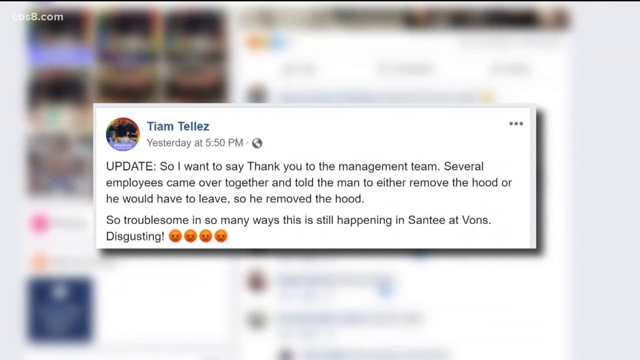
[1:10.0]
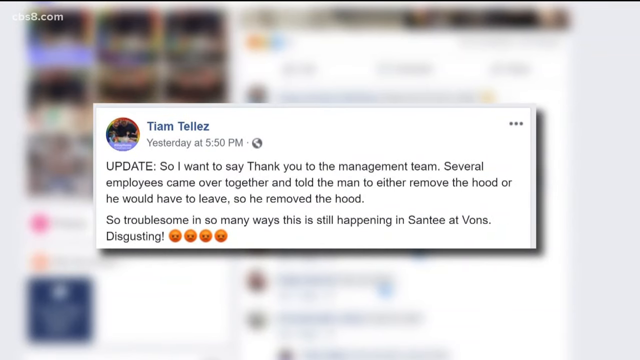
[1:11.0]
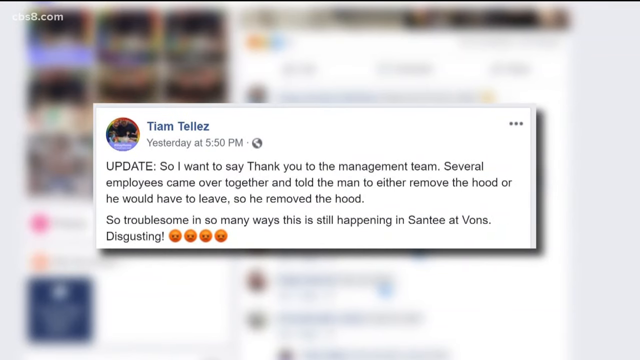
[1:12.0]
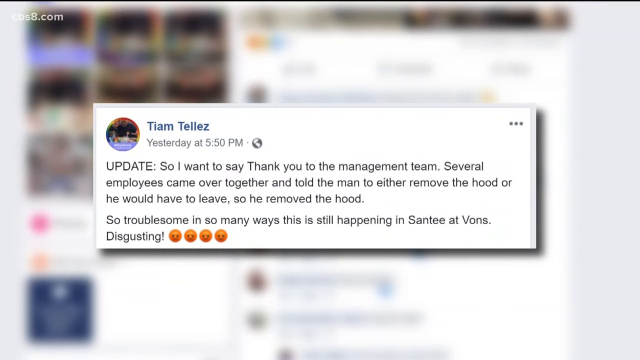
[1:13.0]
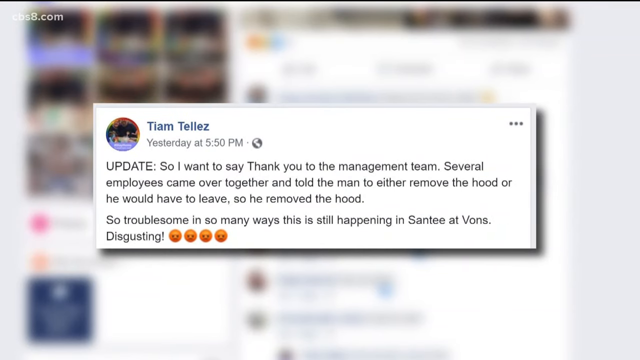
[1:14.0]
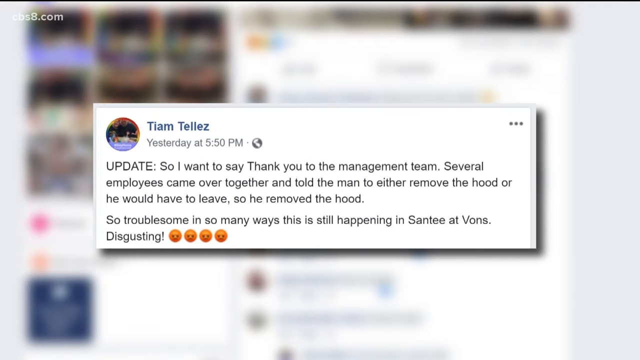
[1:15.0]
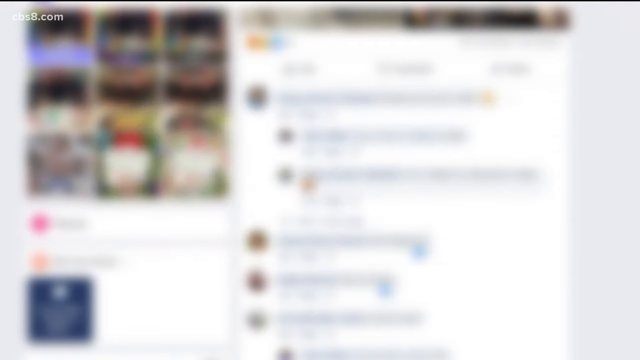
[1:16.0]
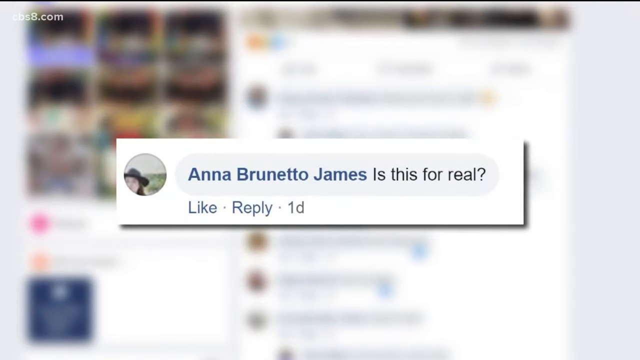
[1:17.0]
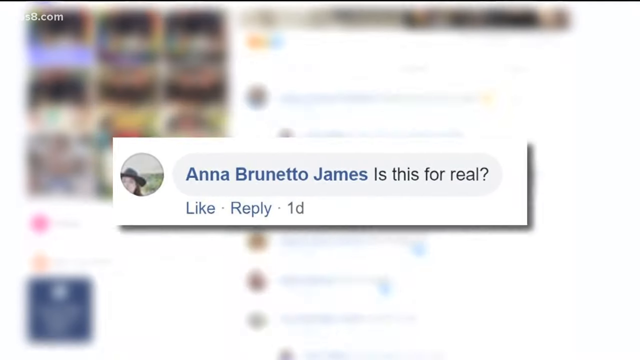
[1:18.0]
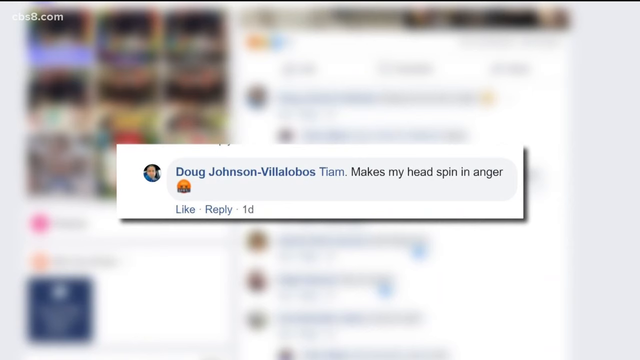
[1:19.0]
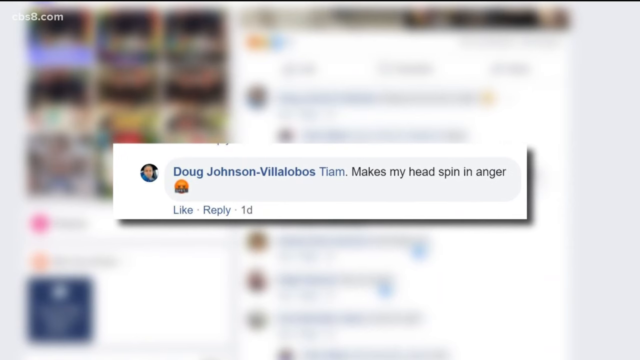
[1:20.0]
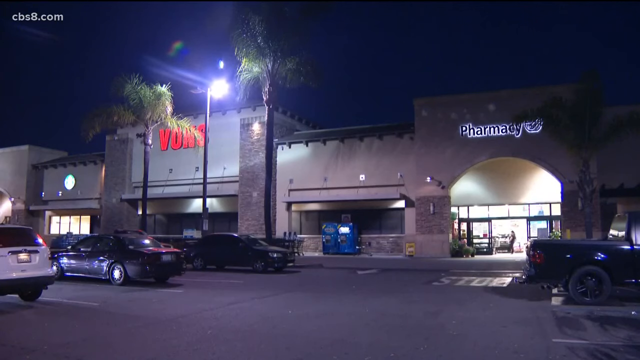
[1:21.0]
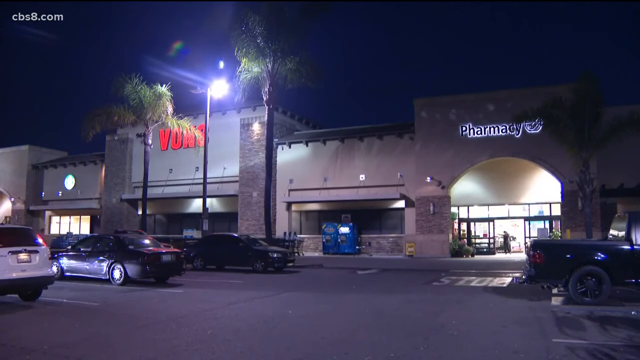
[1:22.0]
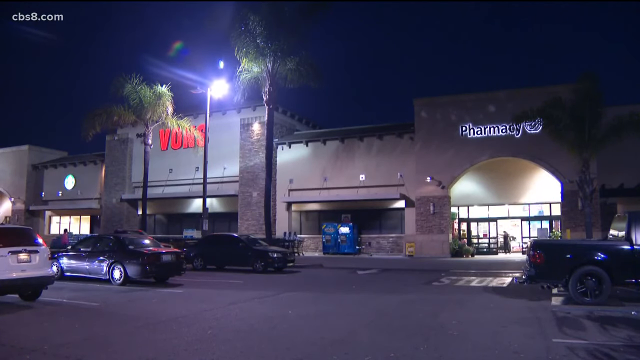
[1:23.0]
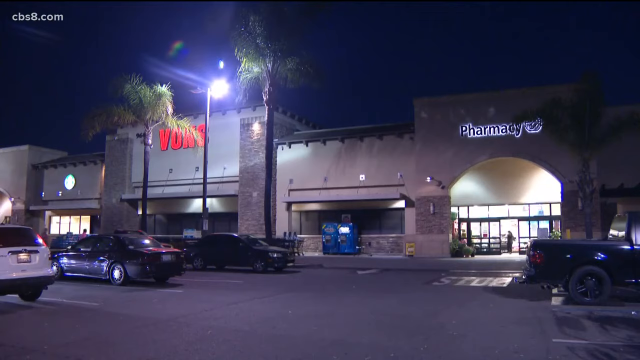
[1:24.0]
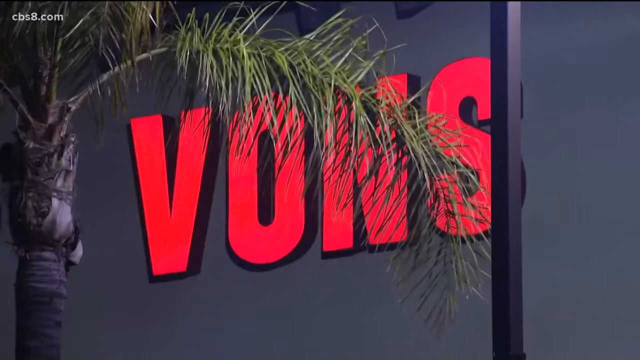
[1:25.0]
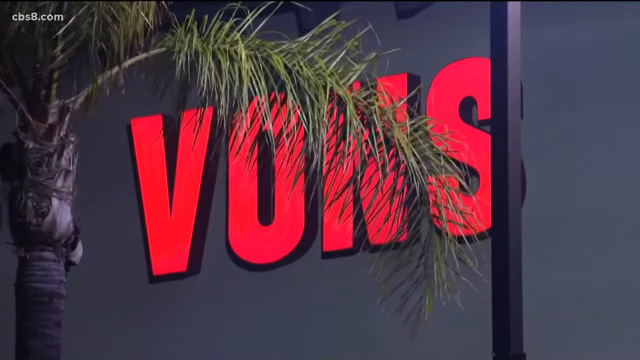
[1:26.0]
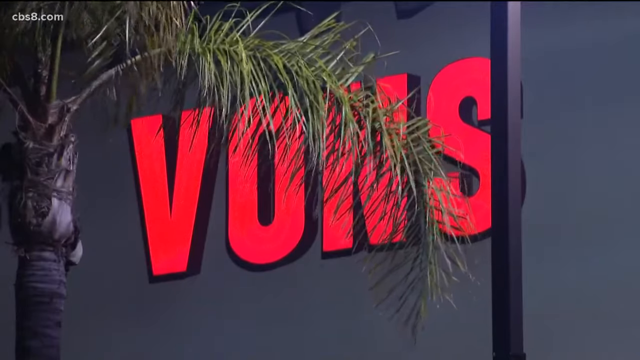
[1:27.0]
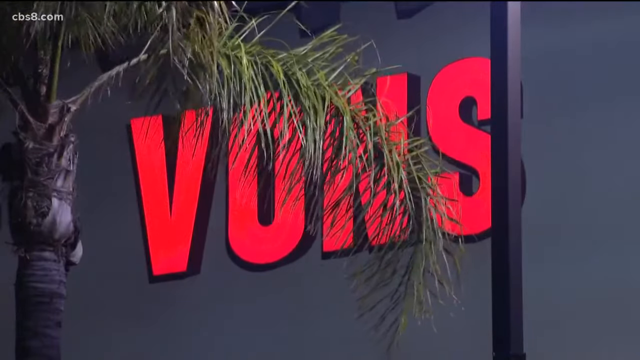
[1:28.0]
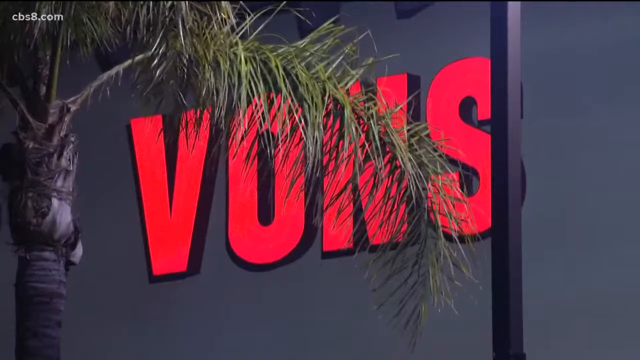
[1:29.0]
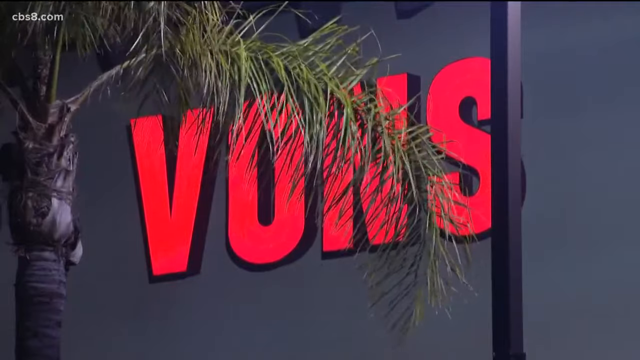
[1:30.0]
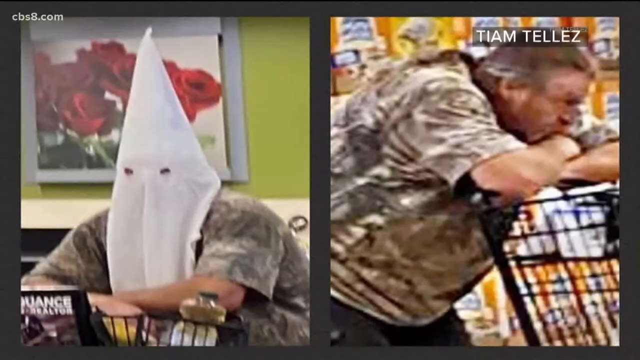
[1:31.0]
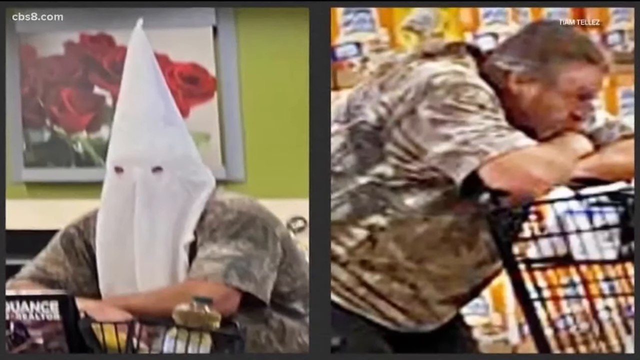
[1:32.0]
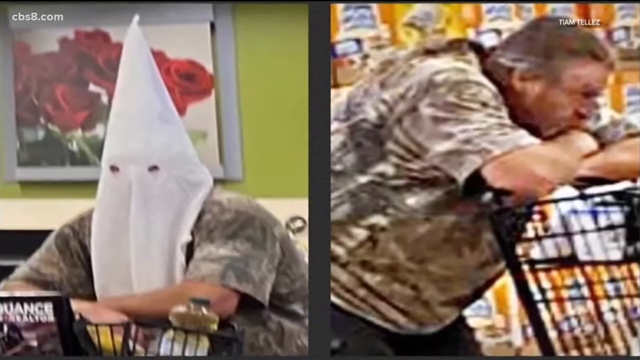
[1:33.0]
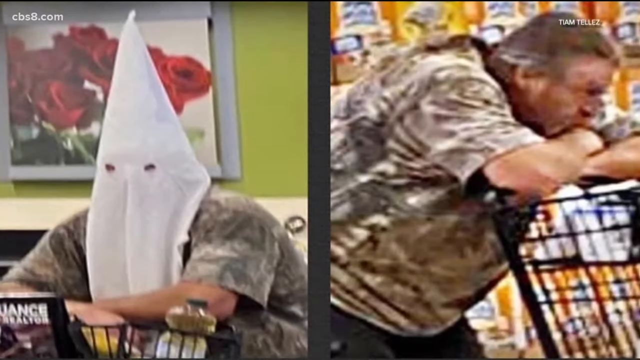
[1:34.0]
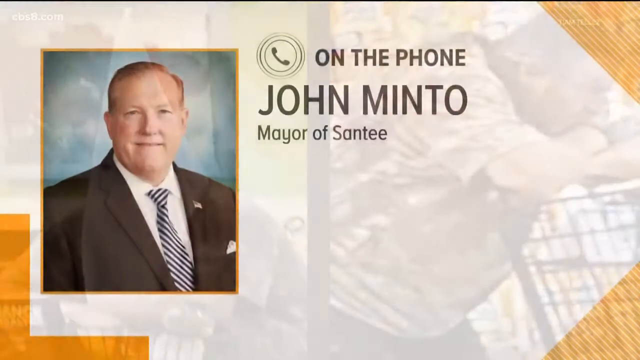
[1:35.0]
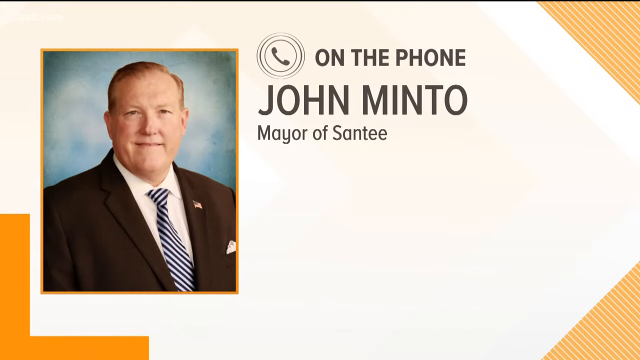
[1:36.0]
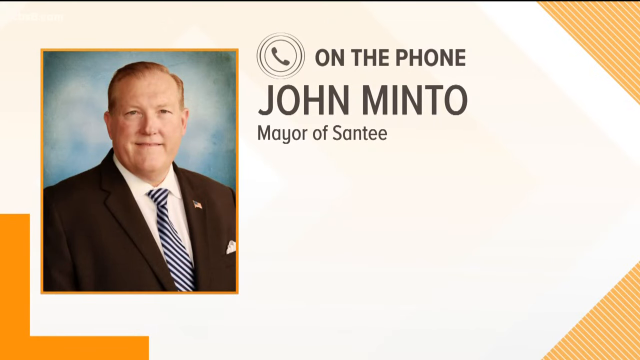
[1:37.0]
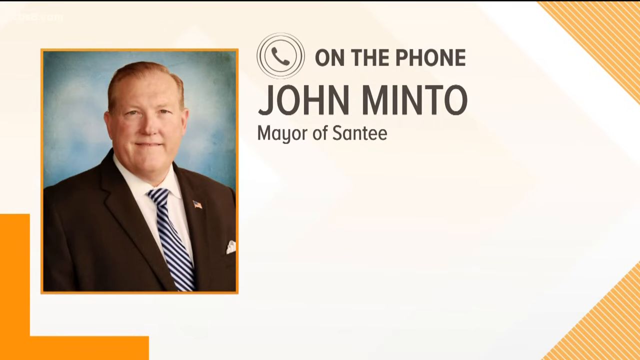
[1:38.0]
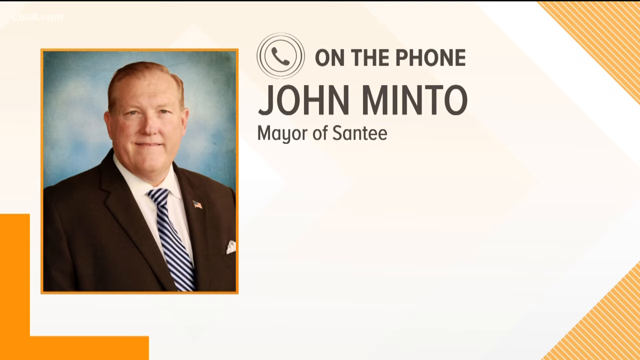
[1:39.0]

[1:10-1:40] A pop-up box shows a comment from the Facebook post about the incident, from a person named TM Tellez. It reads "yesterday at 5.50 p.m." beside a small world icon. The comment says "update, so I want to say thank you to the management team. Several employees came over together and told the man to either remove the hood or we'd have to leave, so he removed the hood. So troublesome in so many ways." and ends with "Disgusting." followed by four upset emojis. Another screenshot shows another reply to the post reading "is this for real?" with like and reply buttons underneath, and another reads "makes my head spin in anger", also with like and reply buttons underneath.